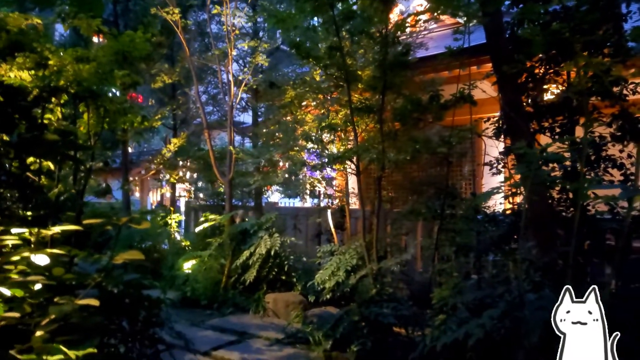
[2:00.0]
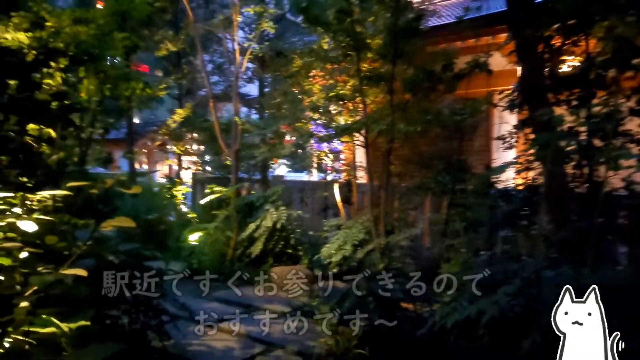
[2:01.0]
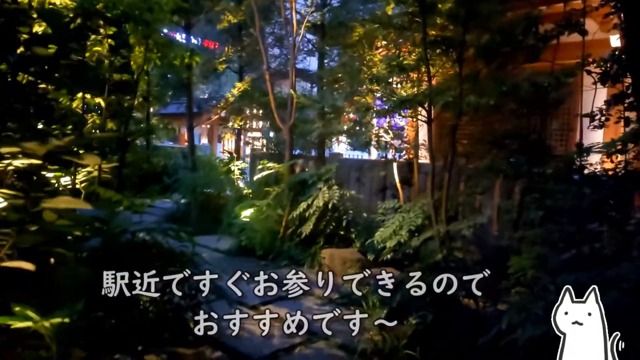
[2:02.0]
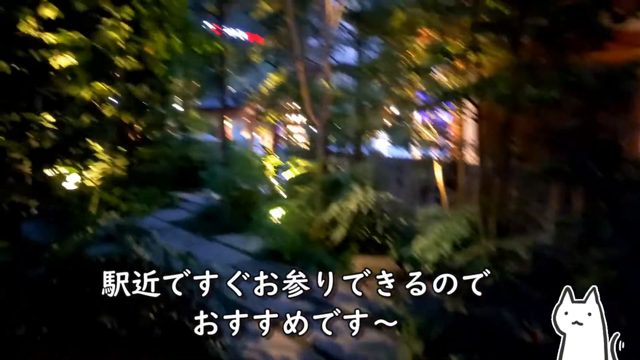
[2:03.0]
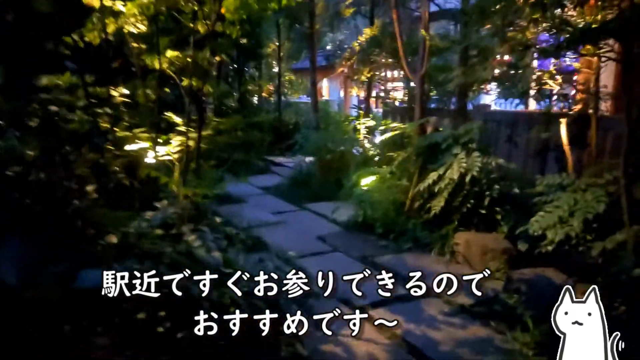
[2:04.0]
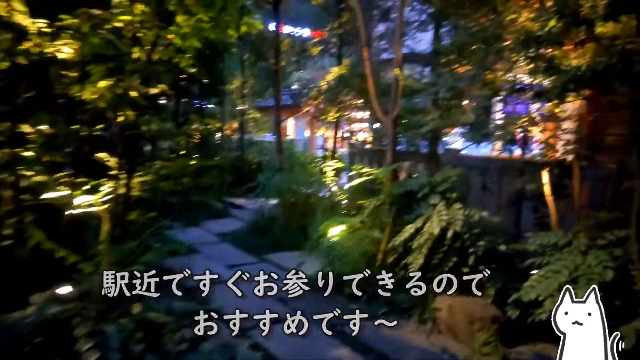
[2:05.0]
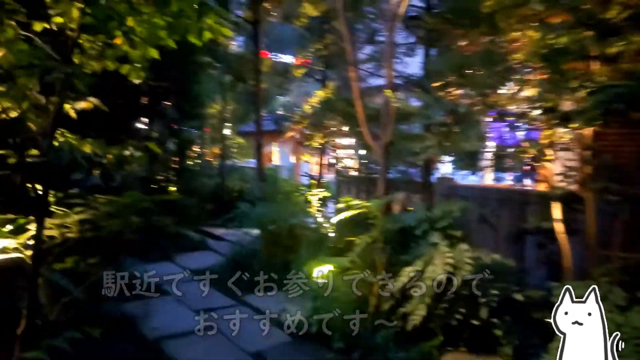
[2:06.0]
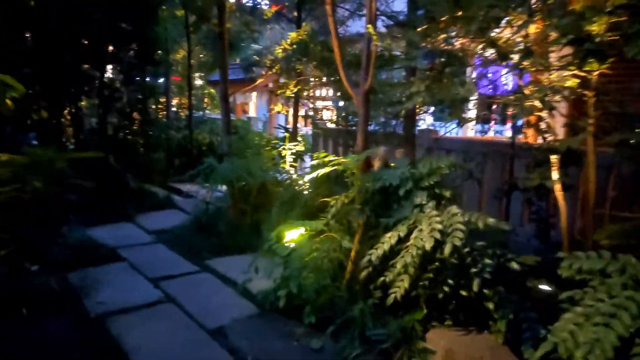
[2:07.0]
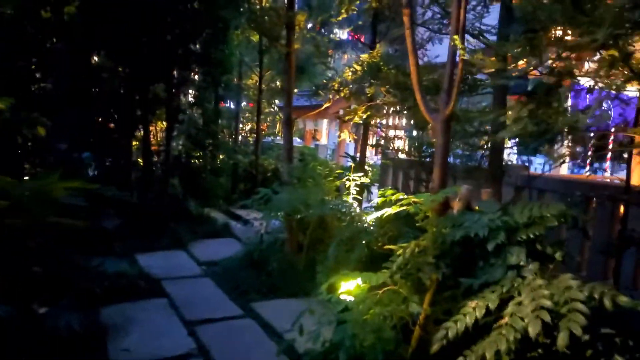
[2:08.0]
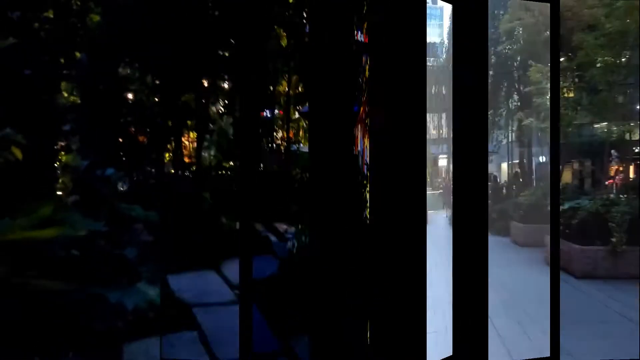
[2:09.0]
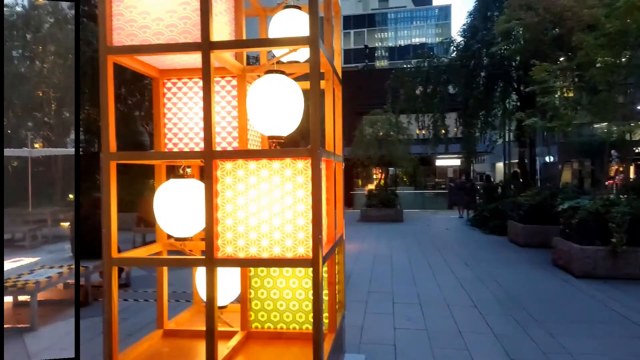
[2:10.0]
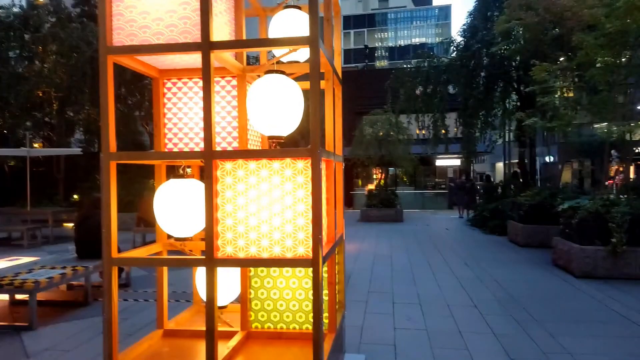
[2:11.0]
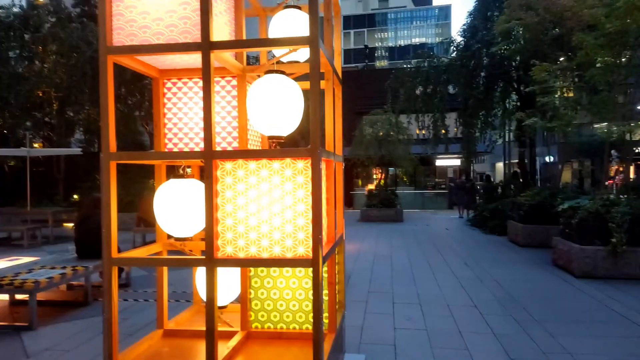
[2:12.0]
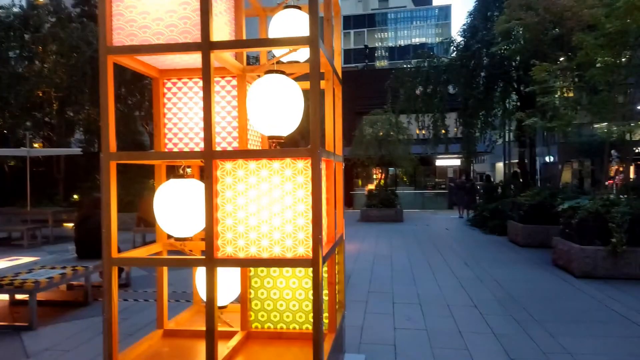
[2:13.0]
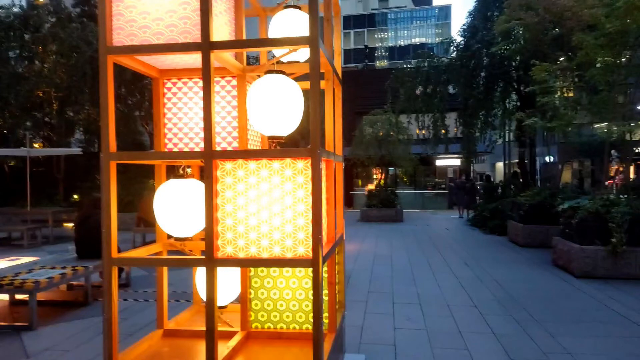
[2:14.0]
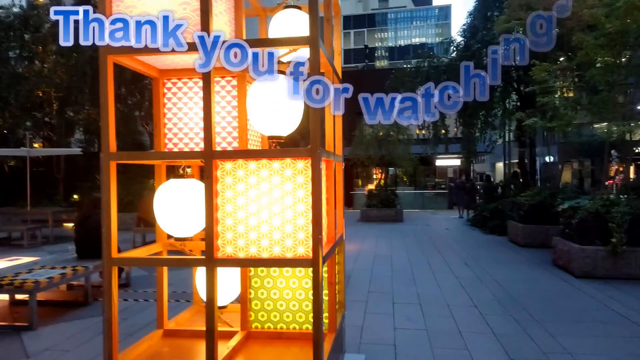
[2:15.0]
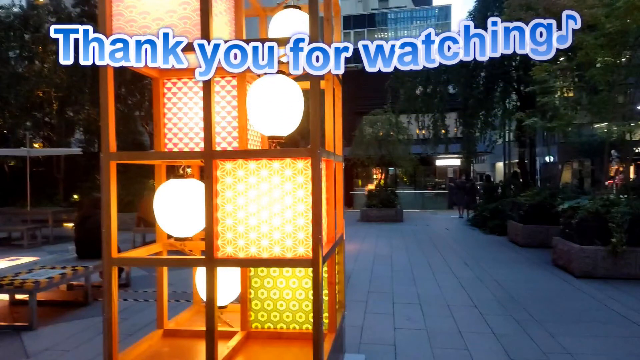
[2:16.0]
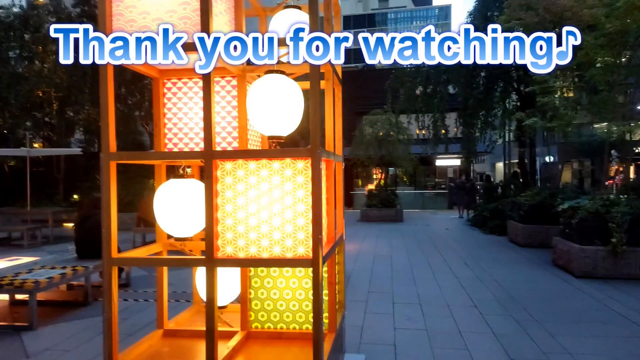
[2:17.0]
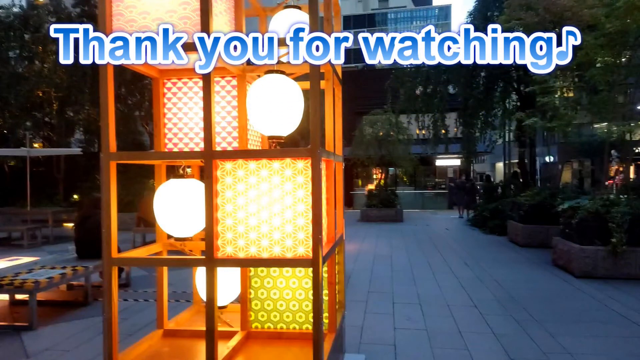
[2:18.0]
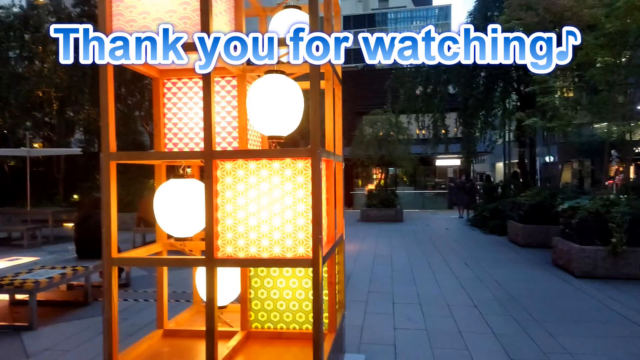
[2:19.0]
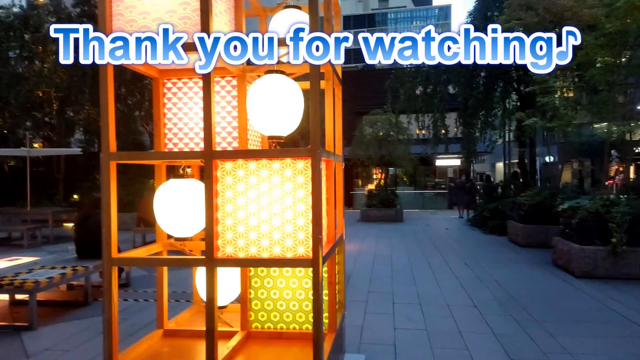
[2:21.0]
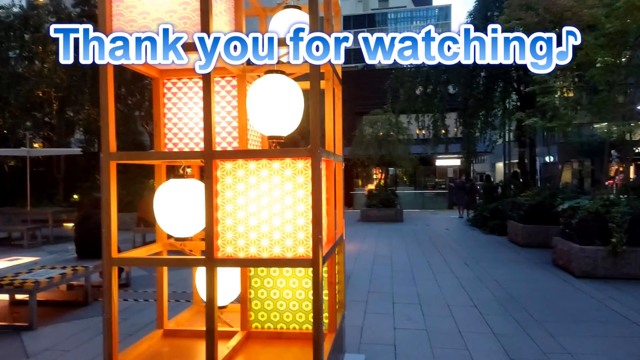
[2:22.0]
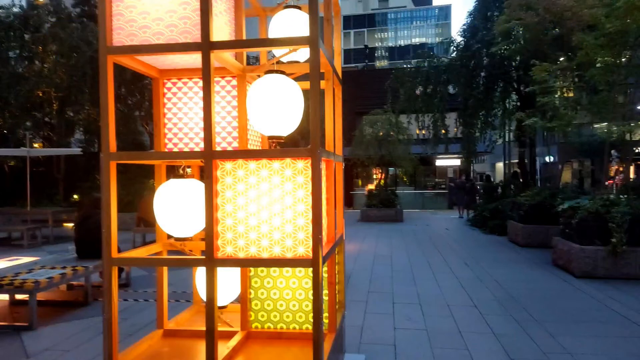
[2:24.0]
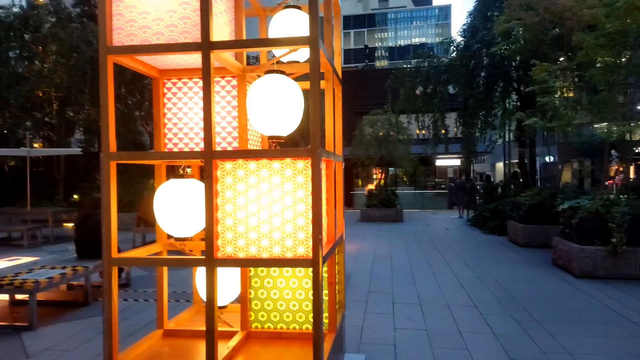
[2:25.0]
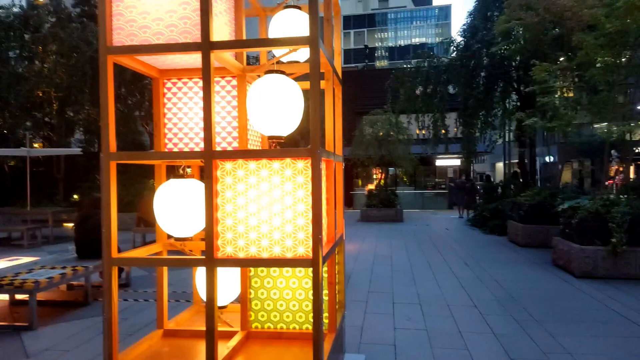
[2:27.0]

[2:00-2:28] The observer continues to follow the trail that wraps around the gazebo, and it leads behind the gazebo. Neighboring buildings are visible, some of them condominiums and some office buildings. The trail is lit with lamps and other light fixtures. The video ends with an area that has benches and tables in different places to sit, surrounded by different plants; it looks like an open mall area for people to relax and lounge. In the background is an office building with its office rooms lit, and some local businesses are on the first level of that building. Approximately five or six people are moving around in the background behind the trail, on the trail and in the area leading up to the lounge area, and about 15 people appear to be in the lounge area.